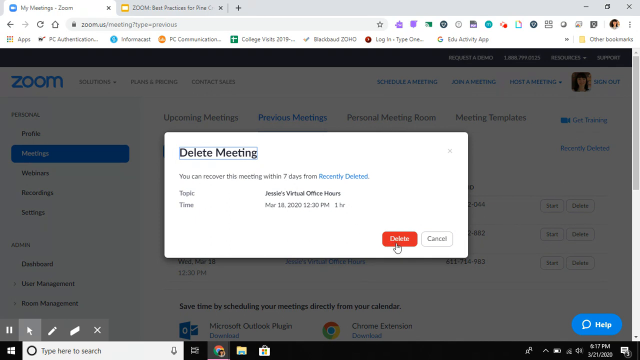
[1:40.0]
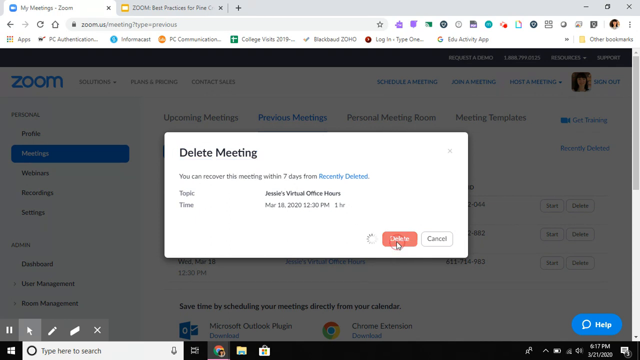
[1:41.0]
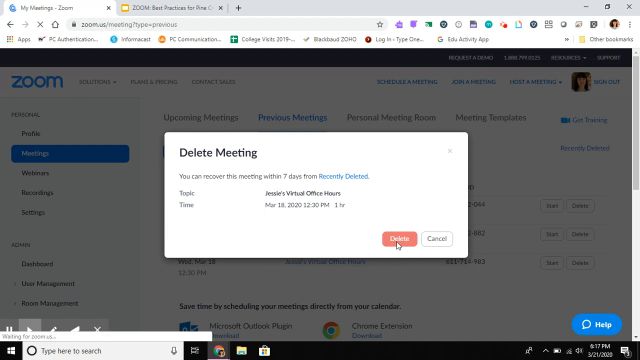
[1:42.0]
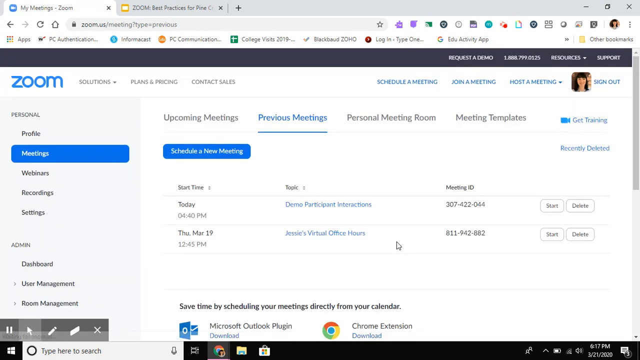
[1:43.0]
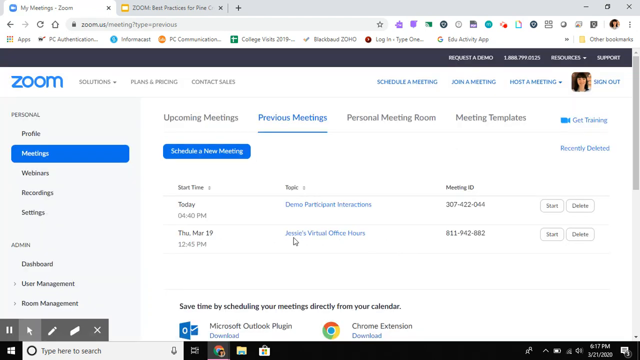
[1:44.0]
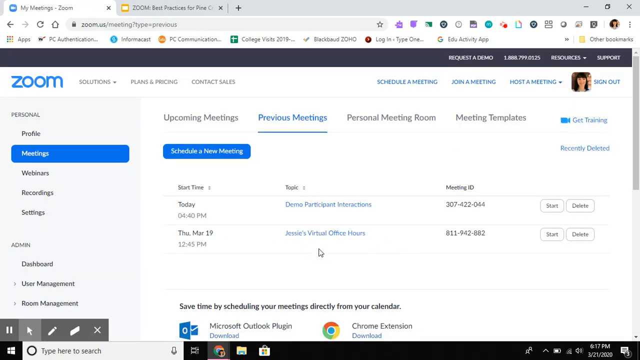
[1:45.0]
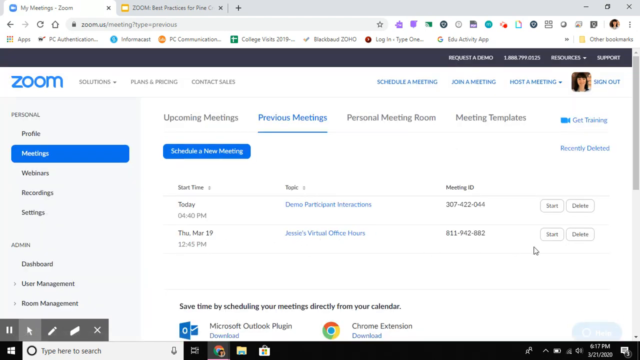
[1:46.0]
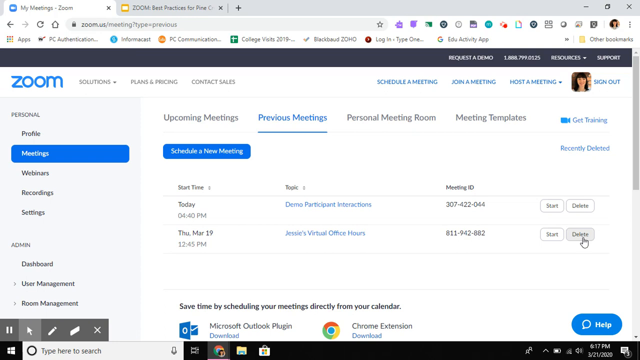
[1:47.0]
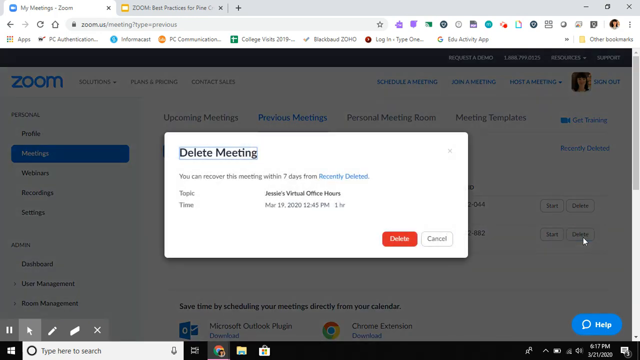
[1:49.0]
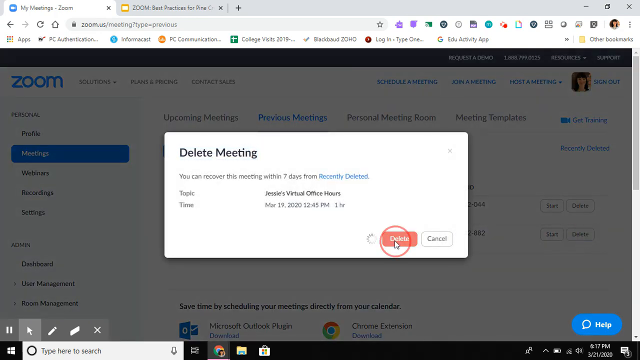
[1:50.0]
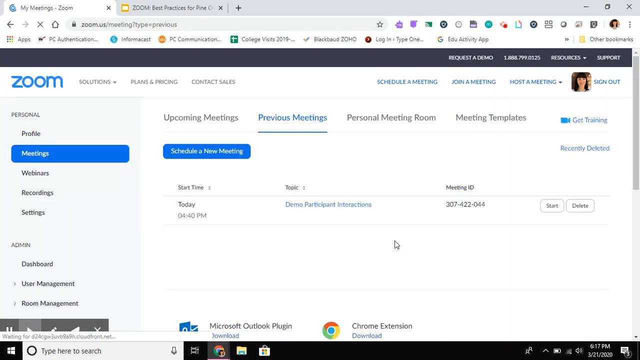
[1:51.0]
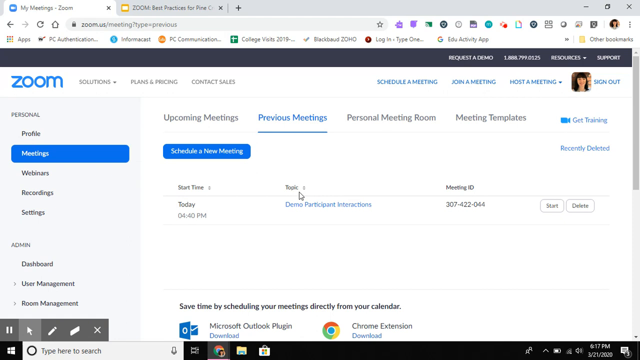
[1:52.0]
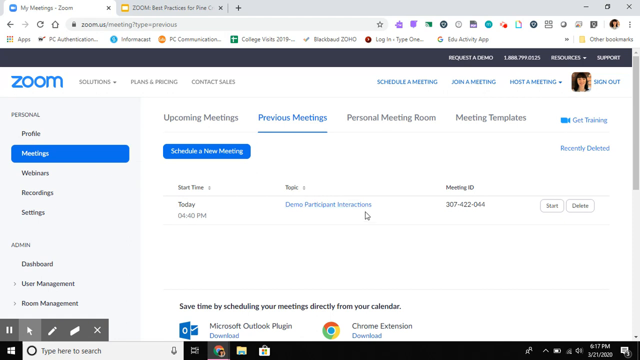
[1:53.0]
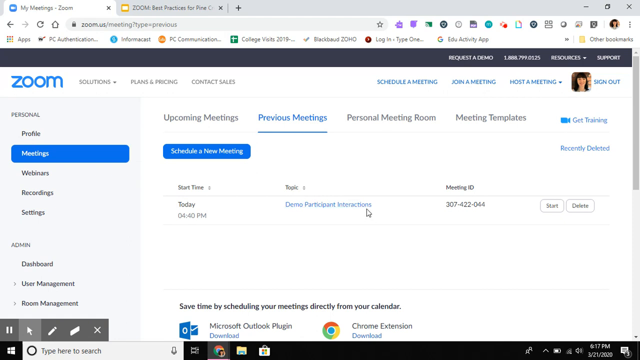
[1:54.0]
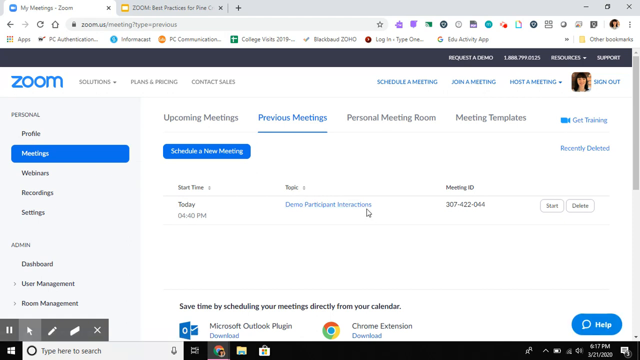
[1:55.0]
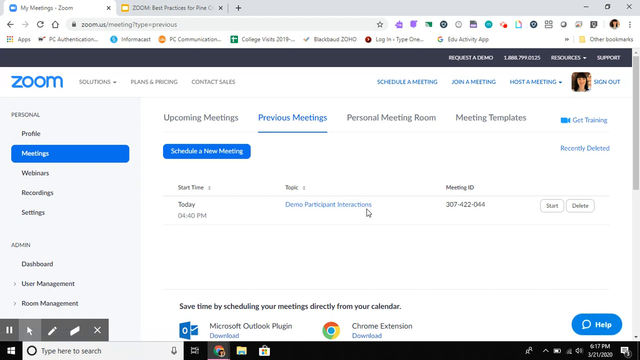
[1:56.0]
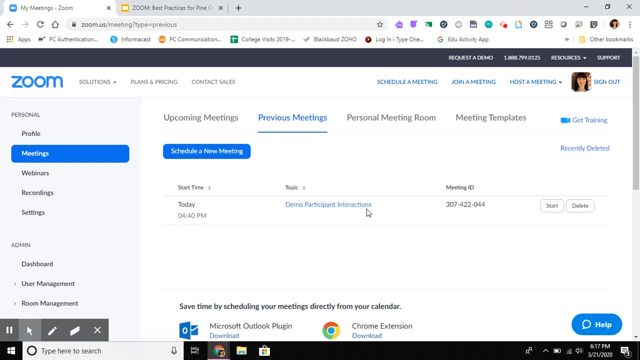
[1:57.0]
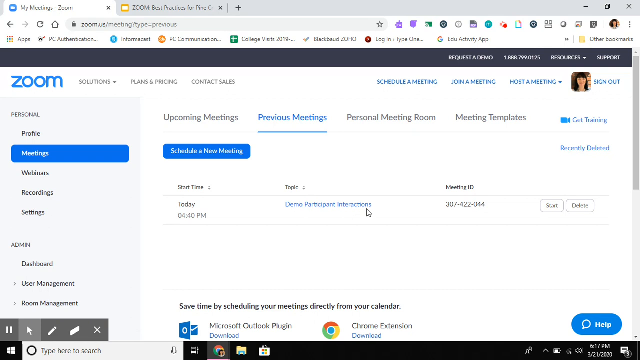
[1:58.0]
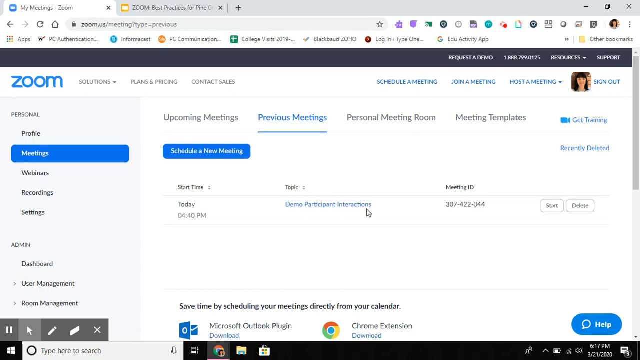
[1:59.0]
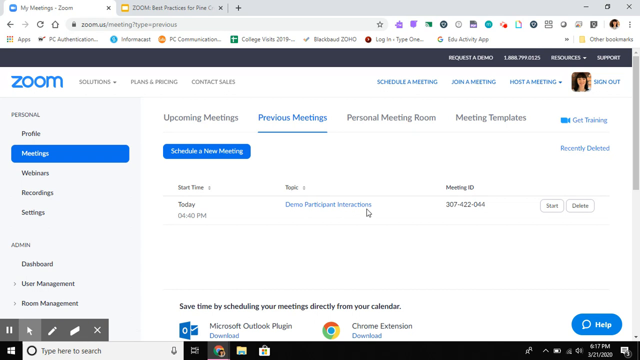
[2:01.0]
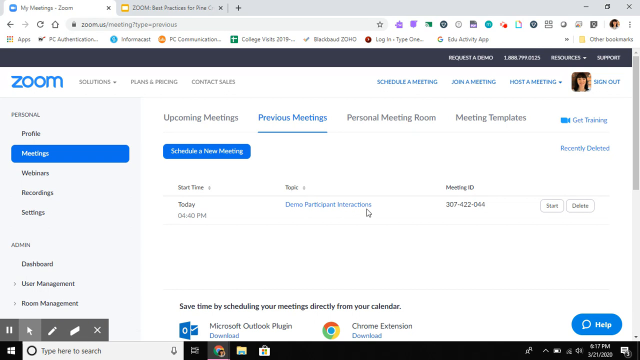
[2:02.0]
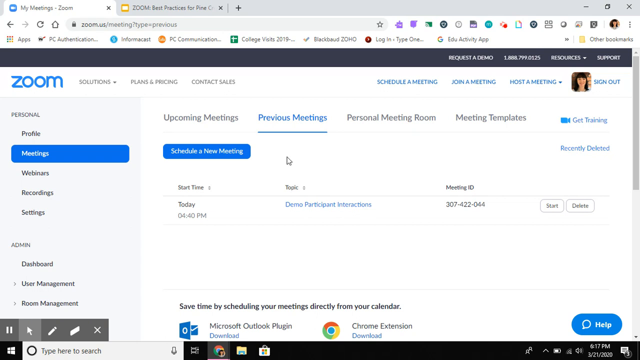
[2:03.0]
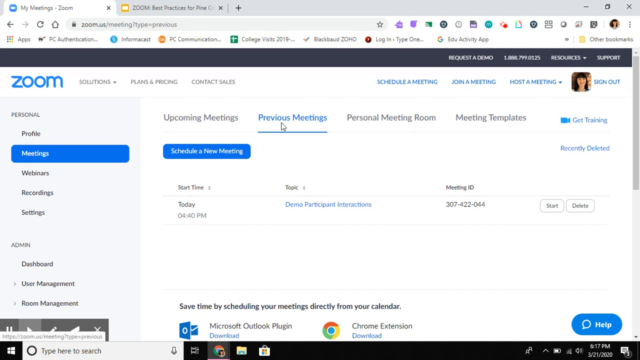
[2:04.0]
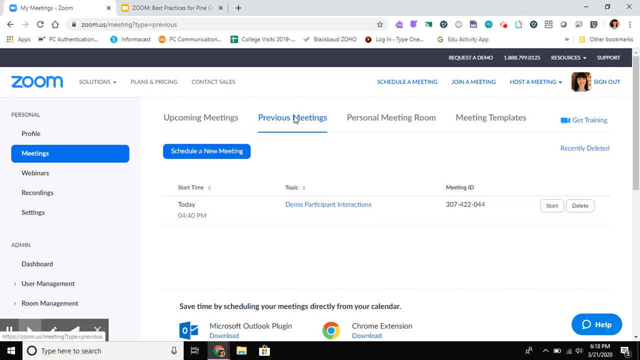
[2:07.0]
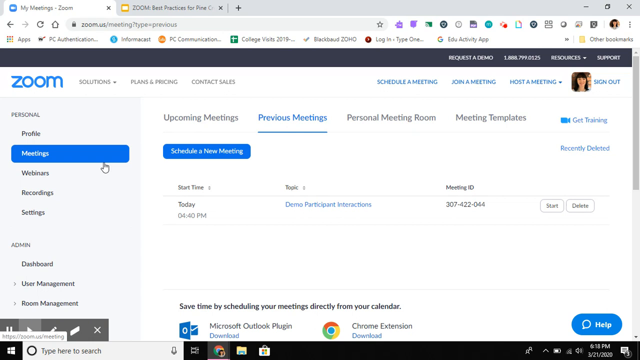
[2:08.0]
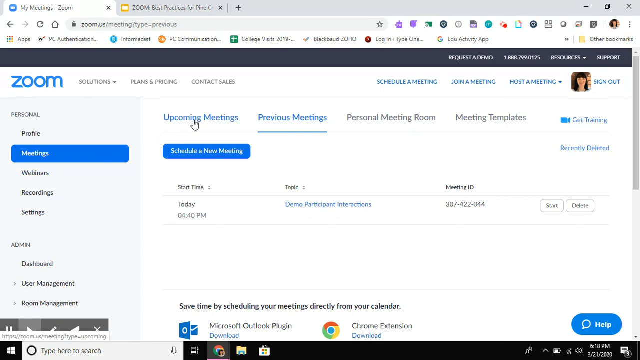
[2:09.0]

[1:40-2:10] The prompt says "delete meeting. You can recover this meeting within 7 days from recently deleted." It shows the topic, "JC, virtual office hours", the time, March 18, 2020 at 12pm, and that the meeting lasted one hour. Two buttons are on the bottom right of the pop-up: an orange one that says "delete" and a white one that says "cancel". The user presses delete and the meeting is deleted, leaving two meetings under previous meetings. The user then clicks the second meeting and presses delete, leaving one meeting, "demo participant interaction". The mouse hovers at the top above "previous meetings", then to the left above "upcoming meetings". The page shows upcoming meetings, previous meetings, personal meeting room and meeting template, along with a blue button that says "get training".